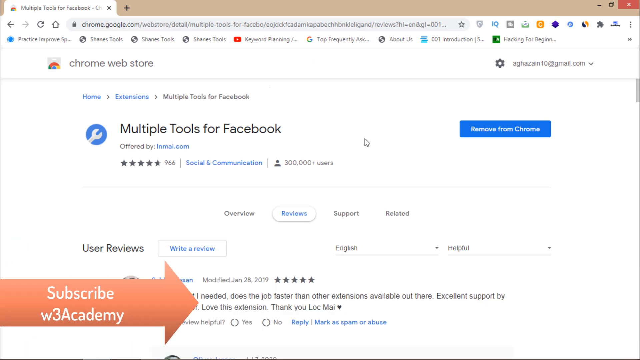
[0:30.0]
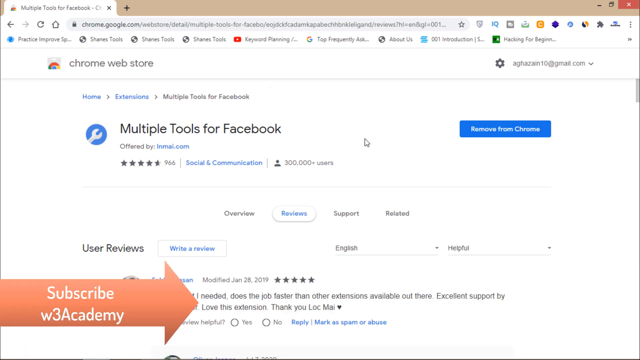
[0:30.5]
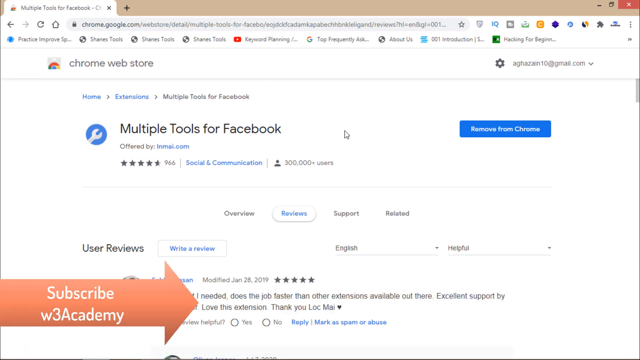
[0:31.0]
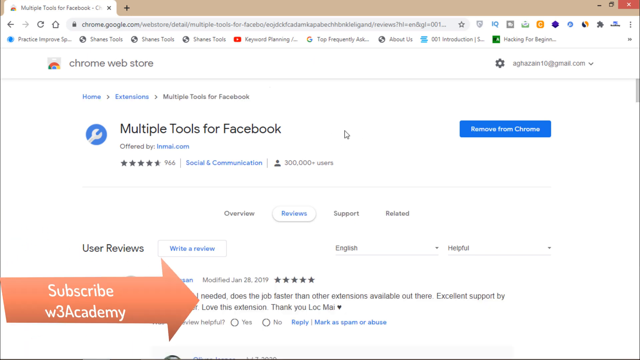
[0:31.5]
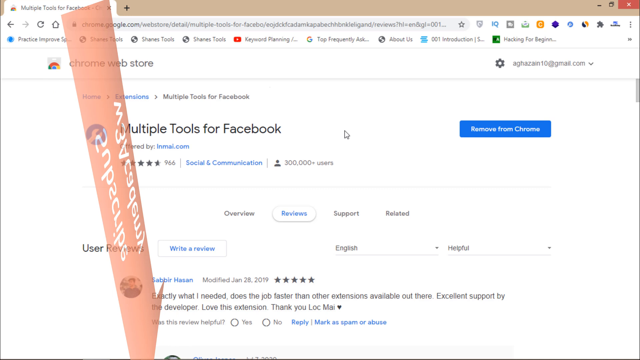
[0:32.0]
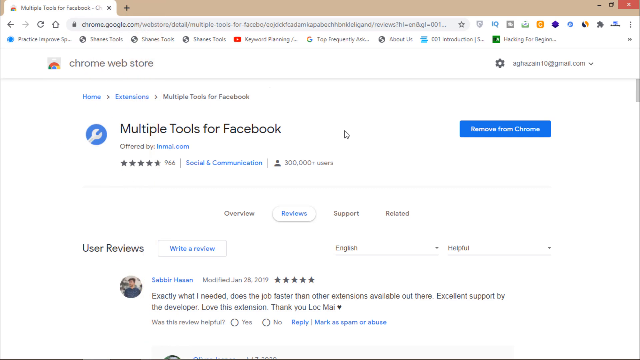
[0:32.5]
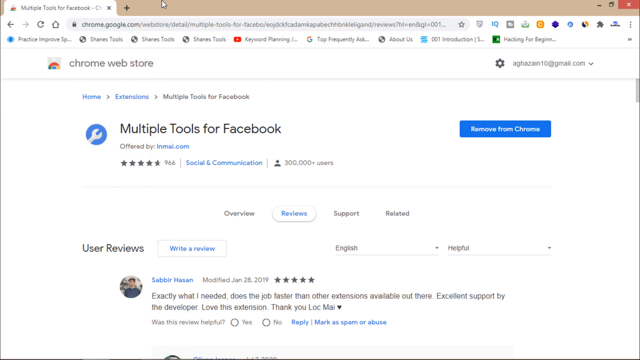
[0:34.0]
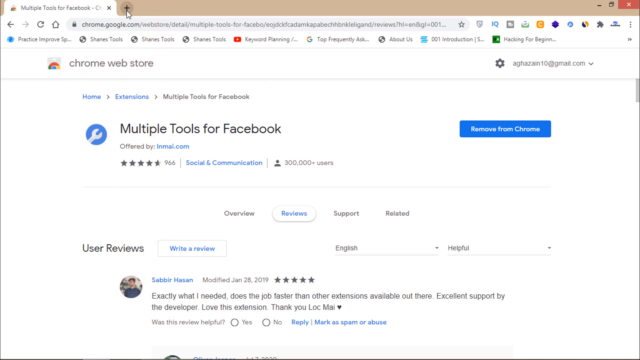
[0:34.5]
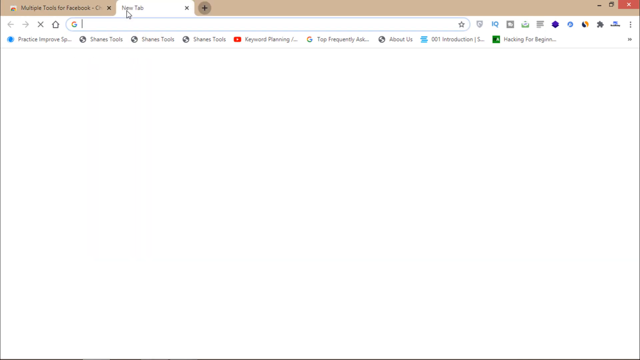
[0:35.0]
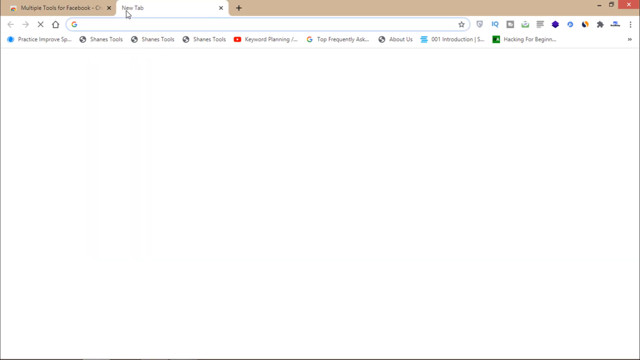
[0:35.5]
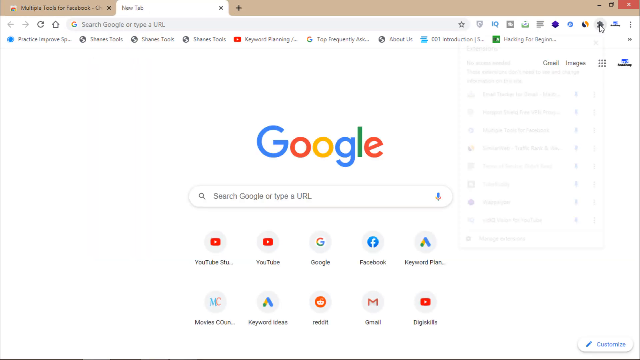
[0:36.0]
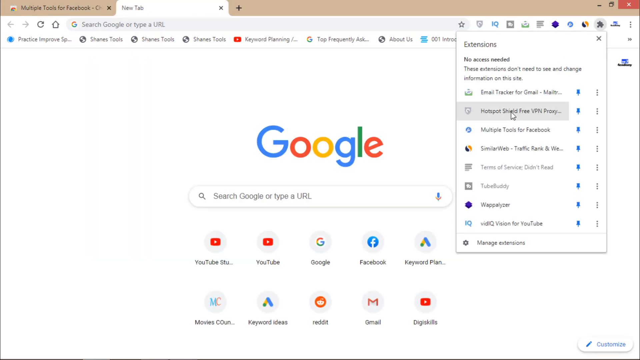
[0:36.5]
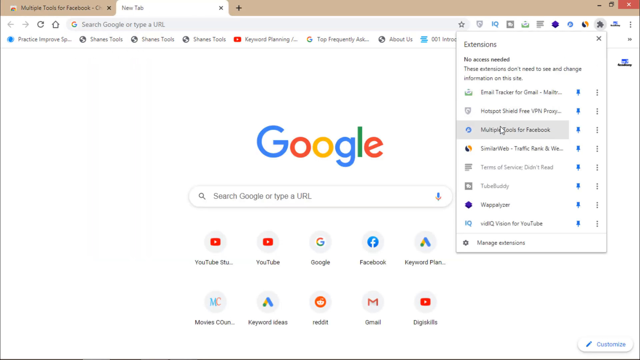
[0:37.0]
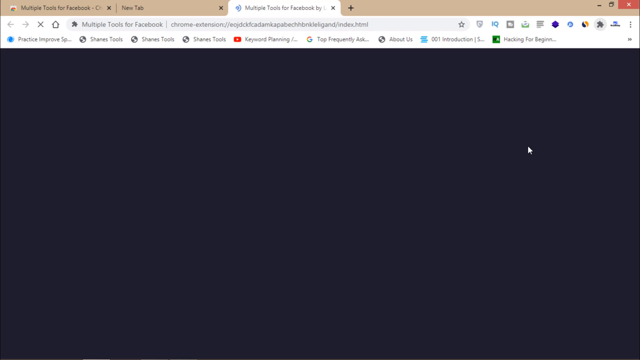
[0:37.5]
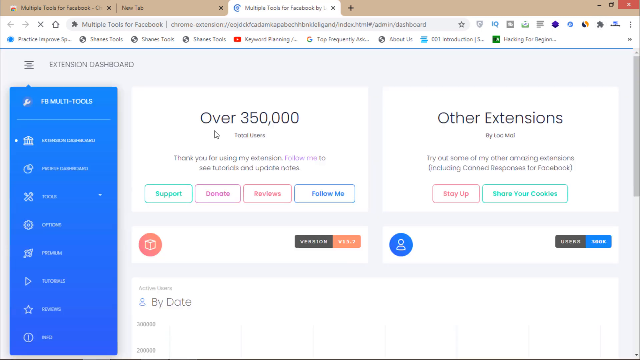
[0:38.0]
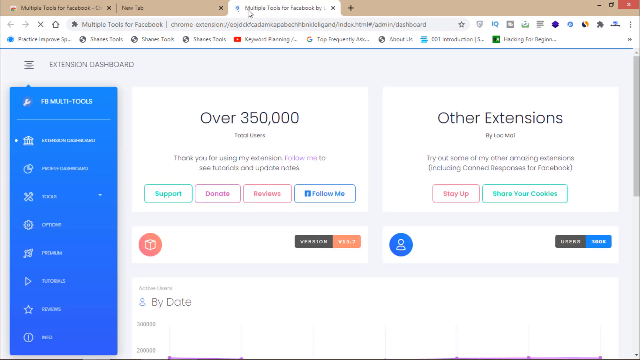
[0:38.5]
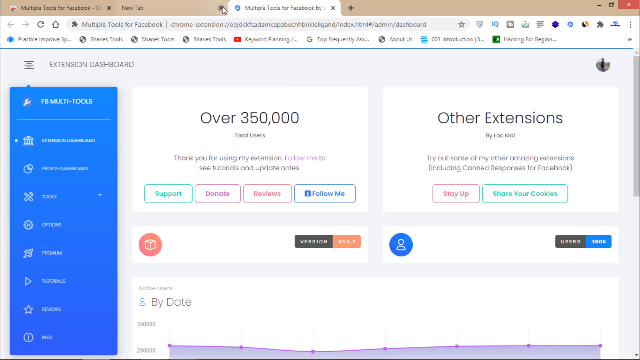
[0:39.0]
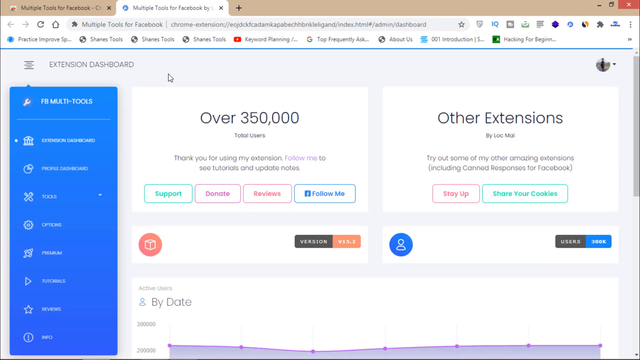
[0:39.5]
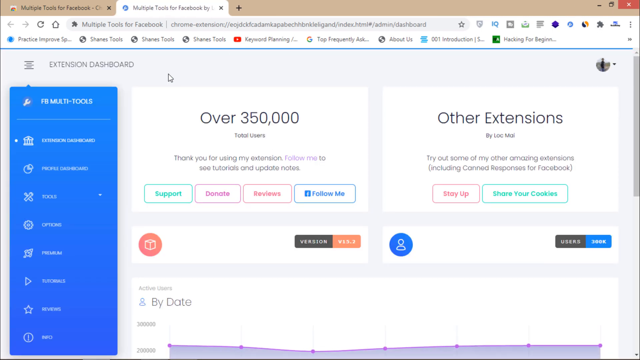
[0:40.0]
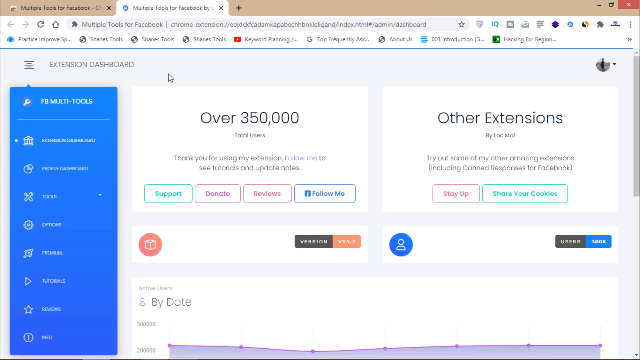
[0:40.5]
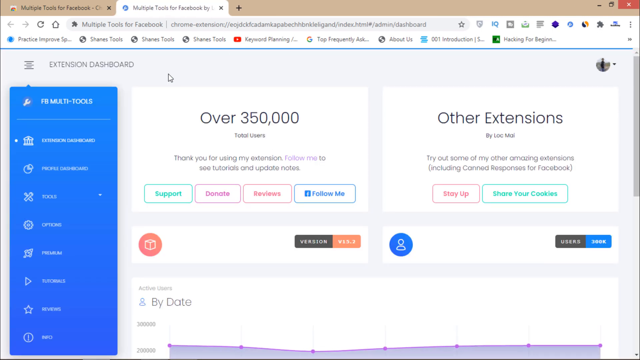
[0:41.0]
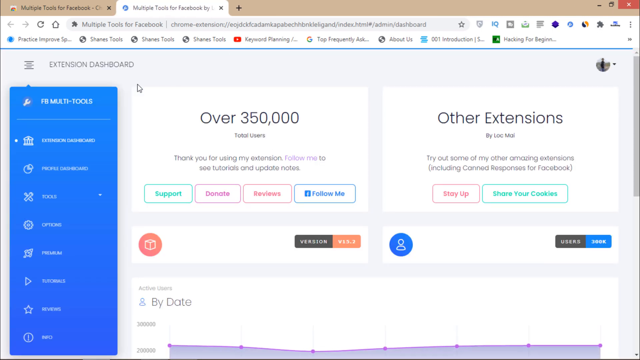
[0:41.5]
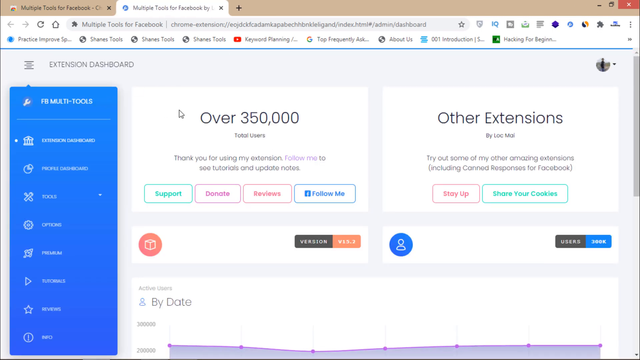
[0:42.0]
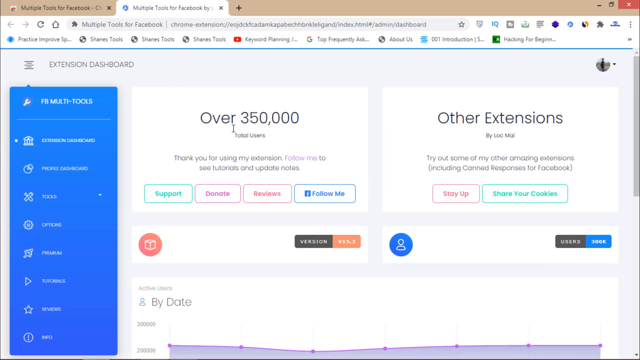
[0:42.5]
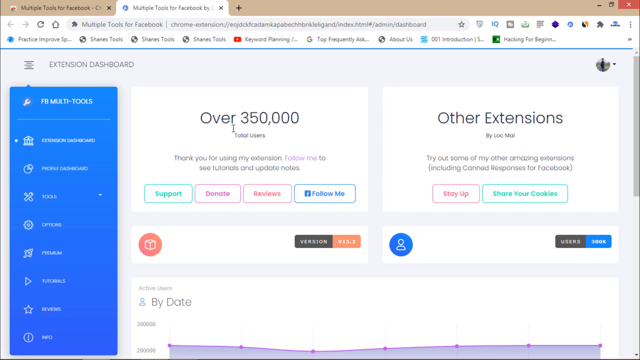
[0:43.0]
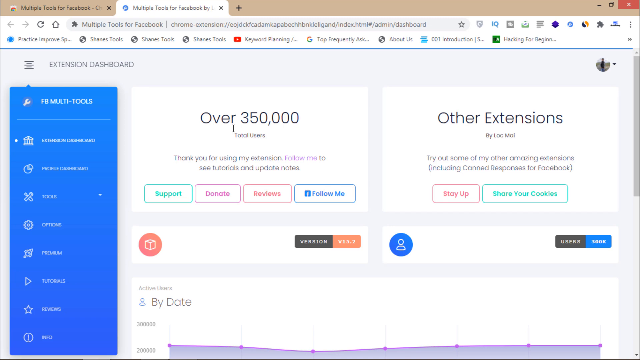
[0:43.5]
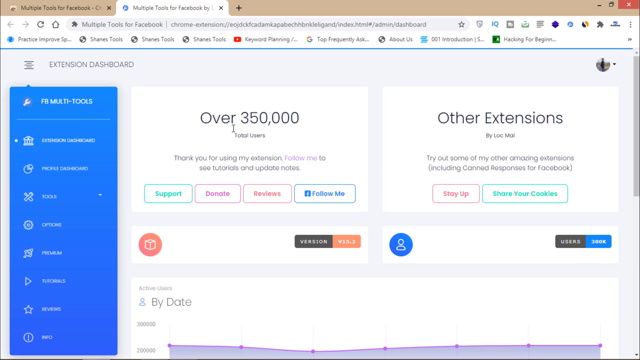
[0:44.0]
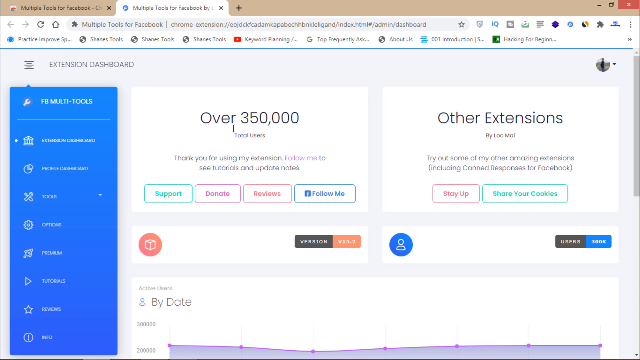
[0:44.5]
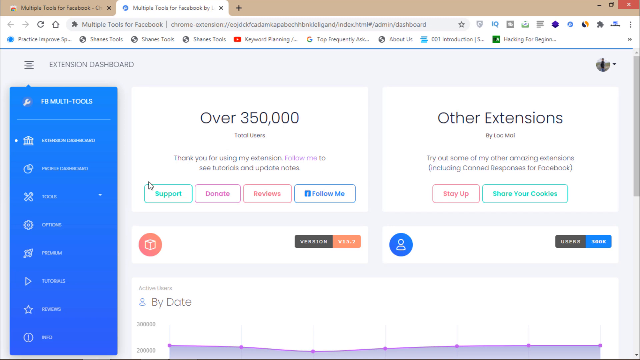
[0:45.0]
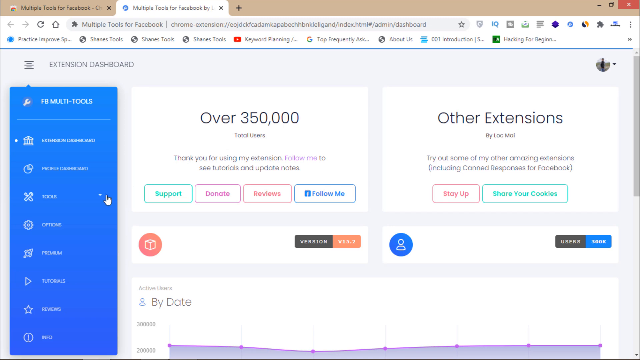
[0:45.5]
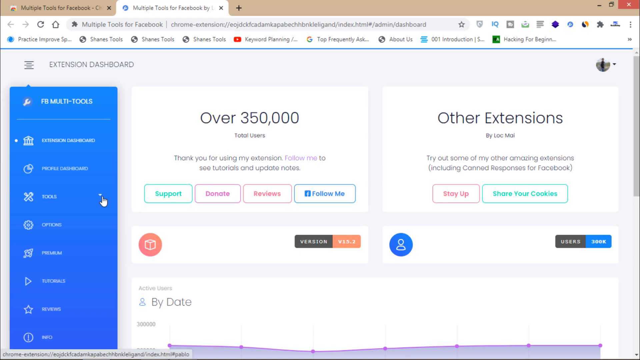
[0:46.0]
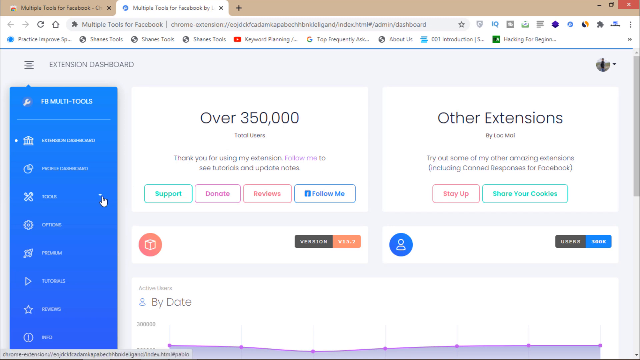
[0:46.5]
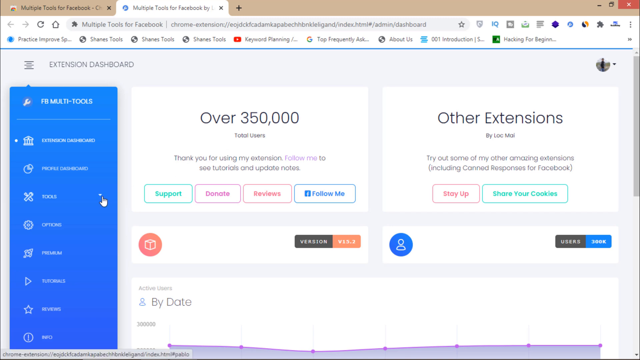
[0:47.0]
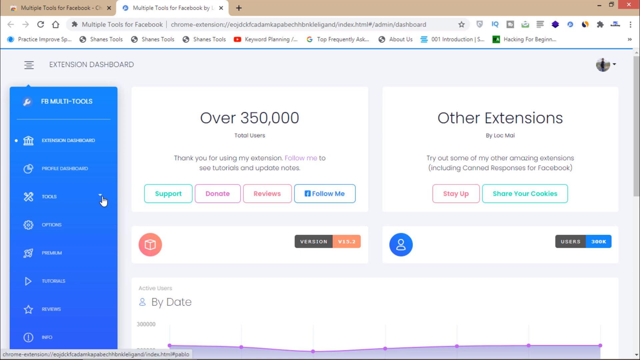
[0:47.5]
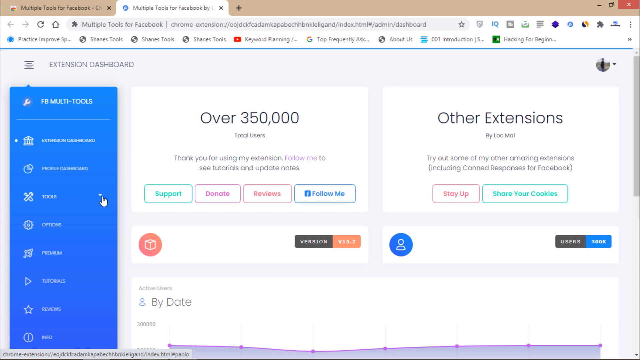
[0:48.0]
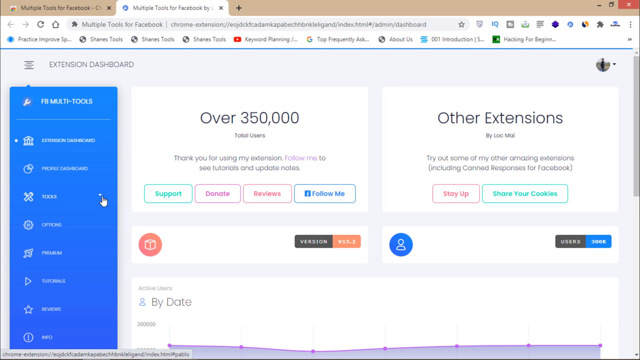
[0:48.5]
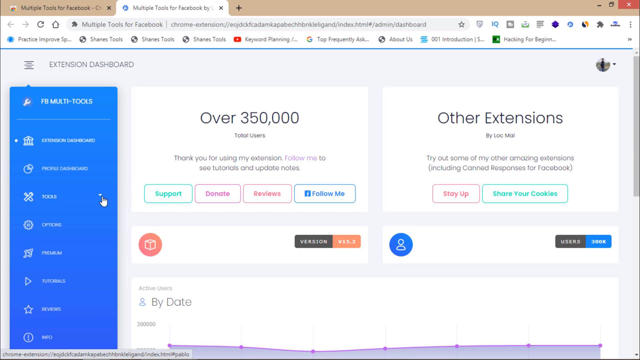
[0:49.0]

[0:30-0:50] Someone is on the Chrome Web Store page for an extension called multiple tools for Facebook. It looks like they already have it, since it says "removed from Chrome" rather than download. The page has user reviews. A new tab is opened, and then the extension dashboard for multiple tools for Facebook is opened. It says "over 350,000 total users" and shows "support," "donate," "reviews," "follow me" and "other extensions," along with "stay up, share your cookies."